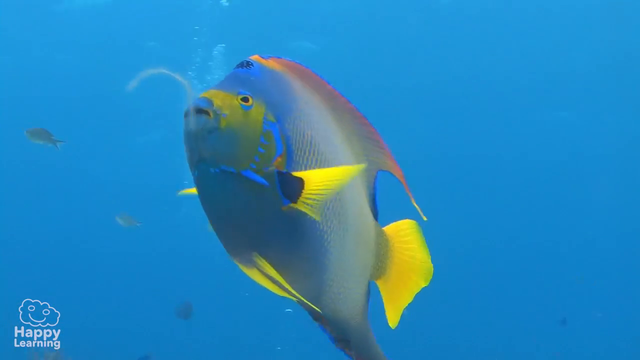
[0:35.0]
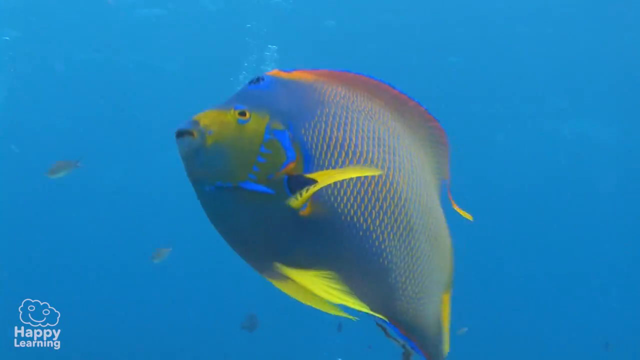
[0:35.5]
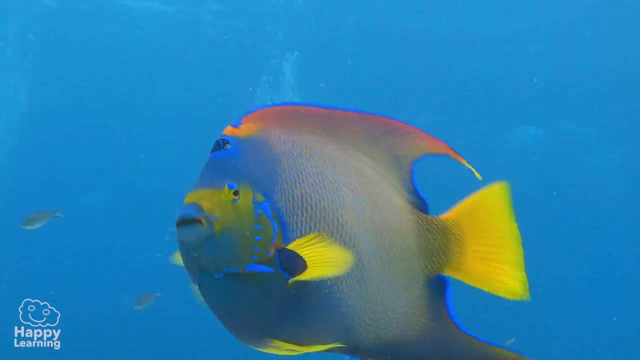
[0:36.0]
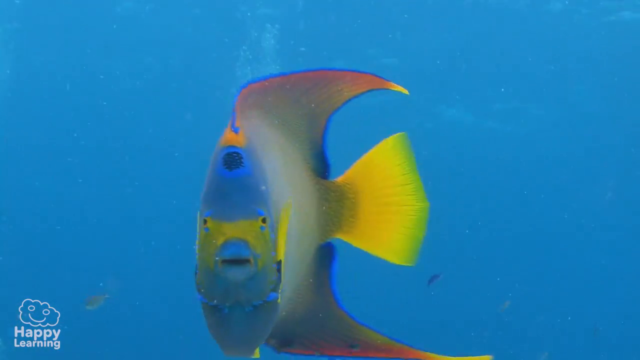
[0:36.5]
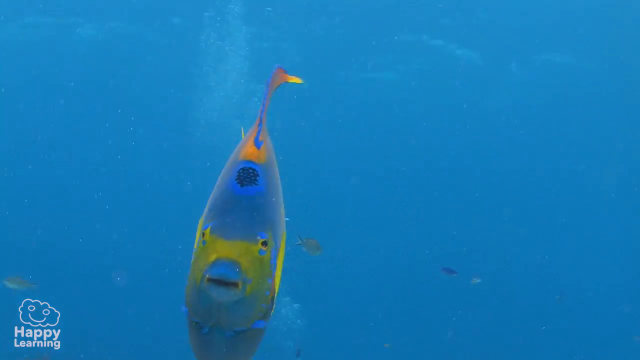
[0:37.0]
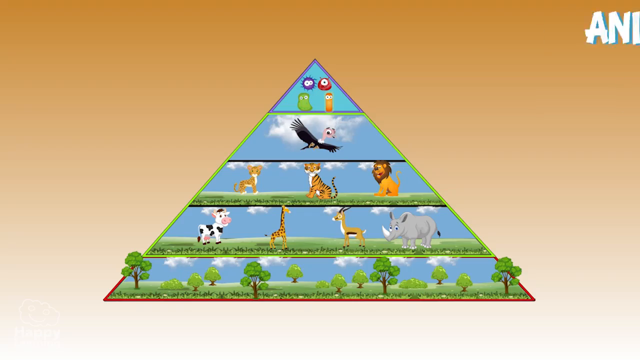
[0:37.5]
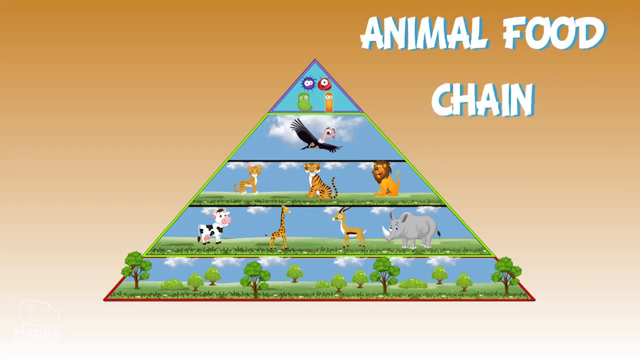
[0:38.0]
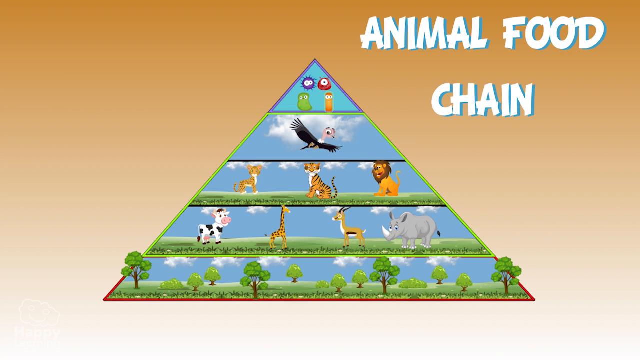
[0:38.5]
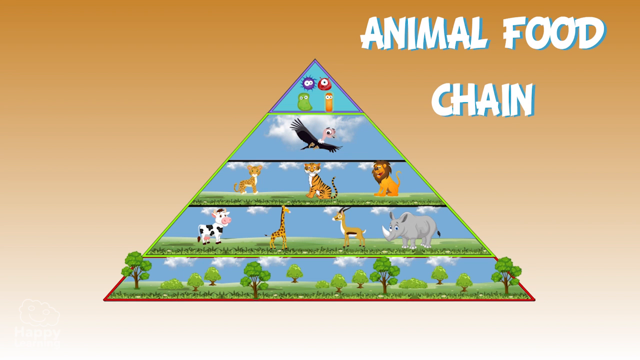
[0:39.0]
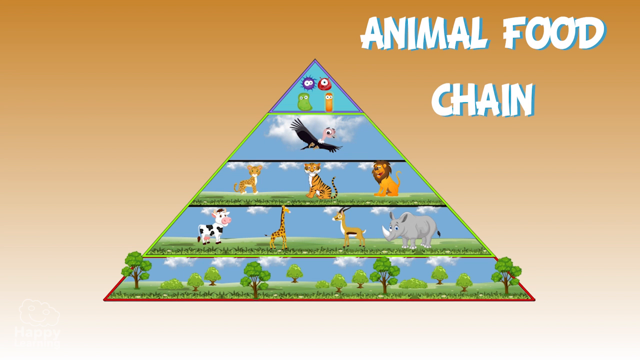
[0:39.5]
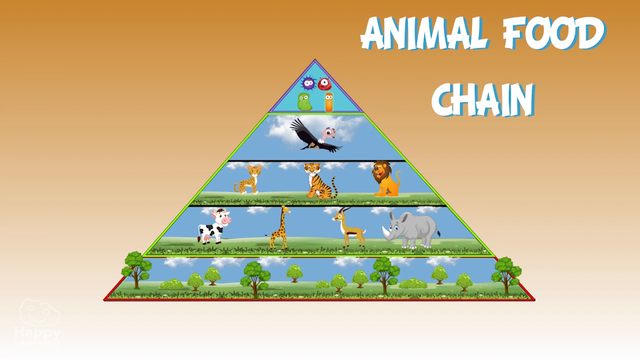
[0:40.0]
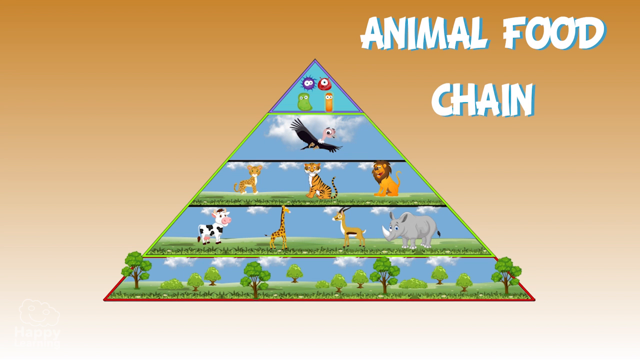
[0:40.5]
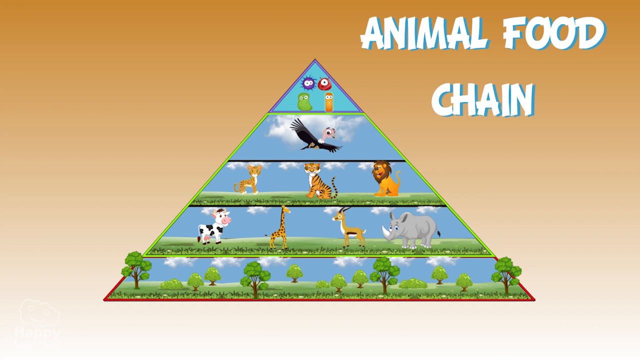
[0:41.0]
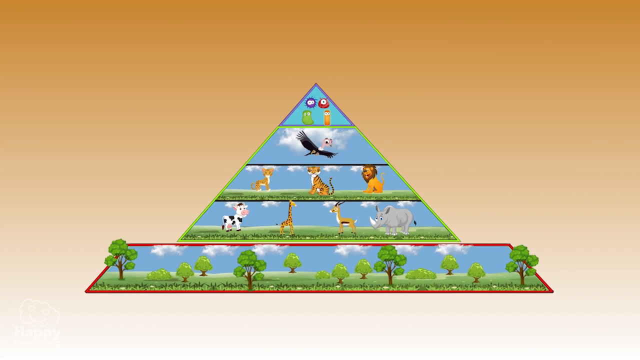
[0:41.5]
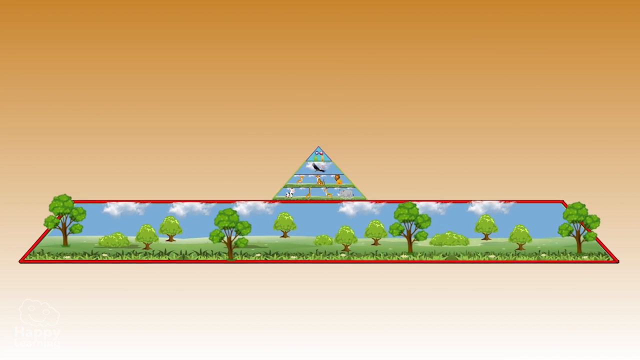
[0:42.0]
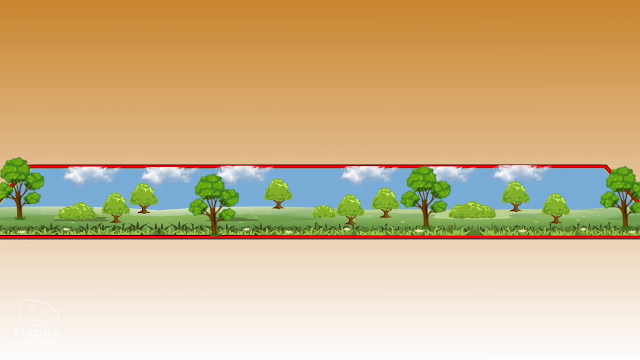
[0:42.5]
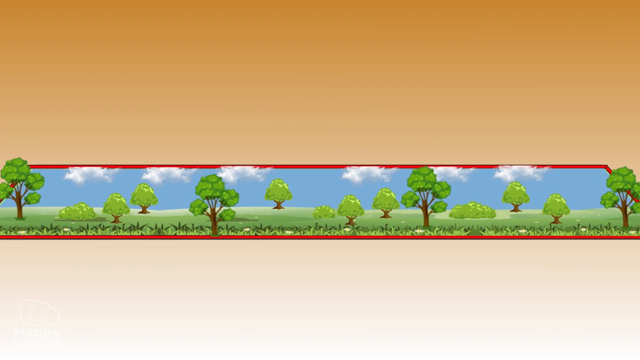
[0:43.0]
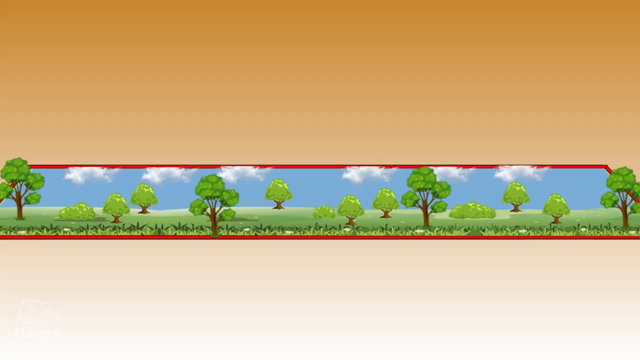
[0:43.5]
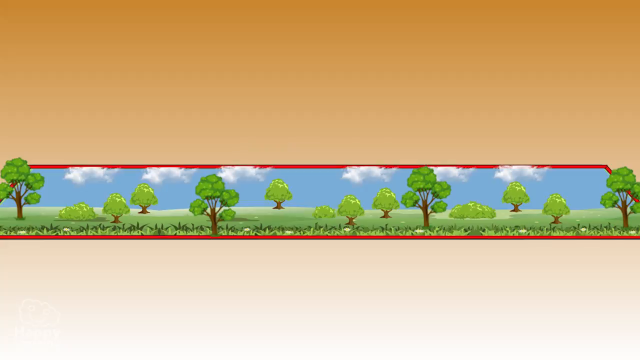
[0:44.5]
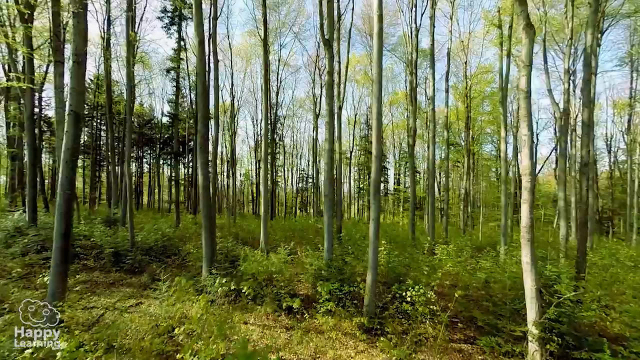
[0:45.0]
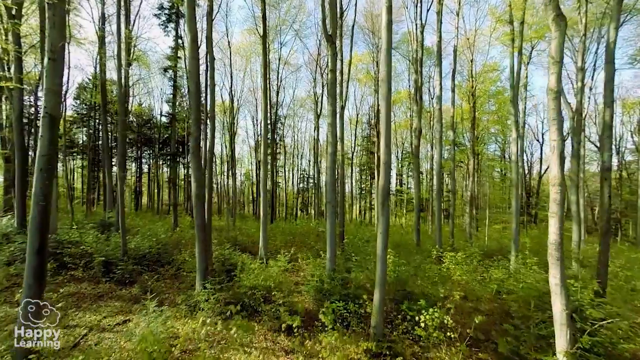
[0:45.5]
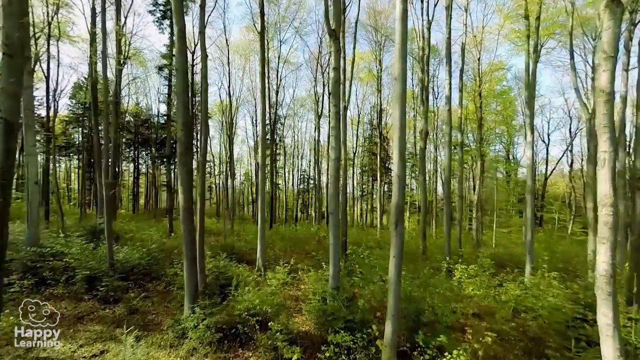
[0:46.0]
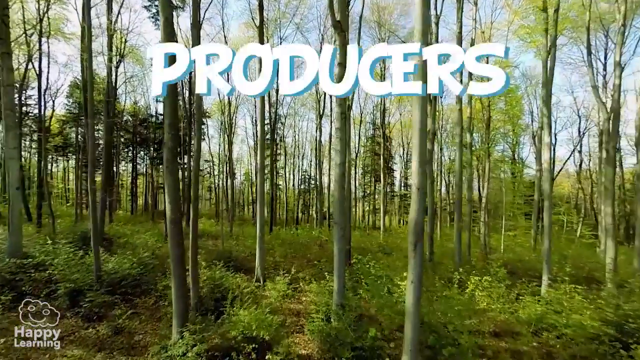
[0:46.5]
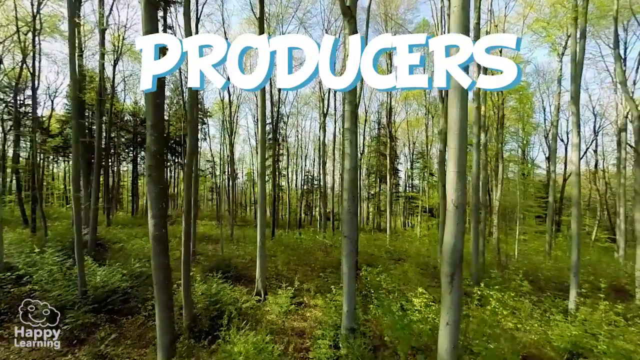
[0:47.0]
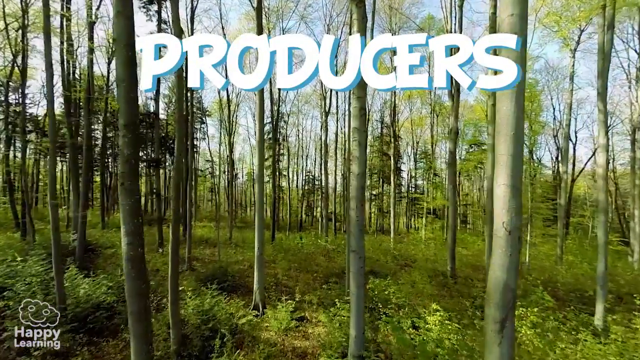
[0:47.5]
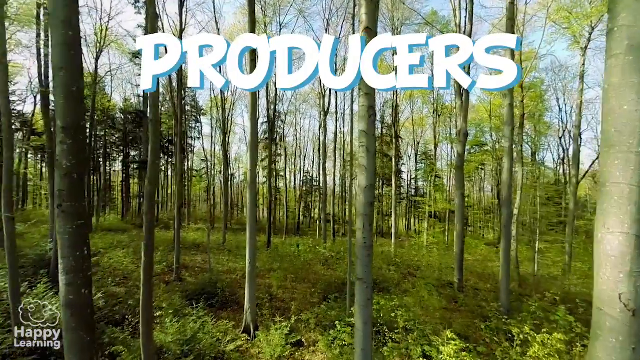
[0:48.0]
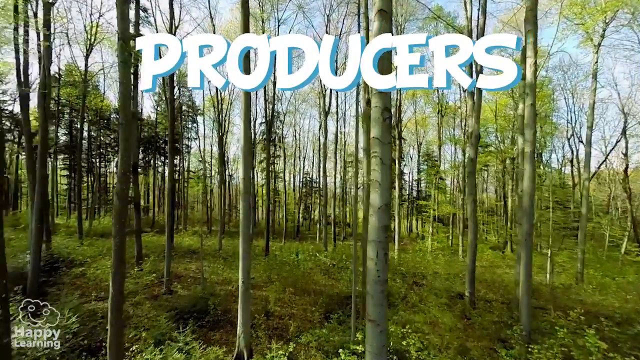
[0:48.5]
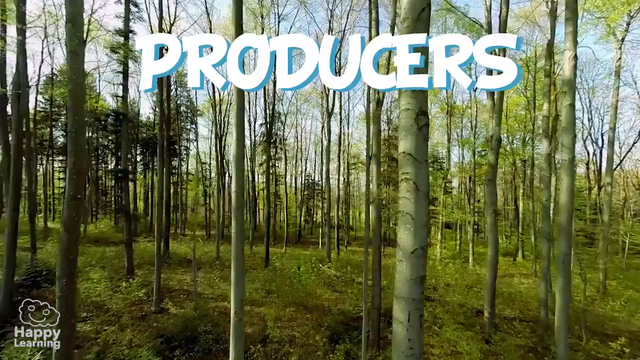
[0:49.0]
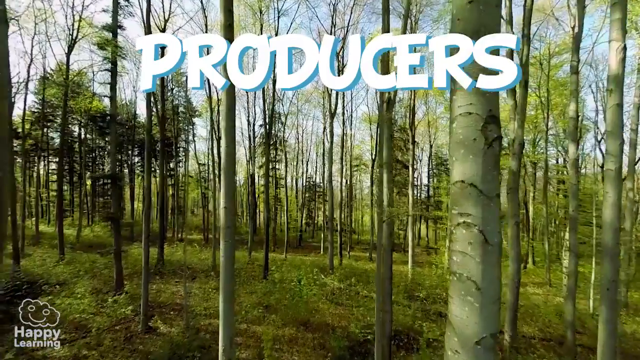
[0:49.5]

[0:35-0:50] The same blue and yellow fish keeps swimming underwater for a few seconds. The video then returns to the cartoon diagram labeled "Animal Food Chain," focuses on the bottom part of the pyramid and zooms in on that portion, which contains only drawings of trees and grass. Next comes what looks like possibly drone video moving forward through woods, showing a bunch of tall, skinny trees as far as the eye can see. As it progresses, the caption "PRODUCERS" appears at the top center in large white bold letters with a kind of aqua drop shadow, and it remains there as the view moves farther into the woods.